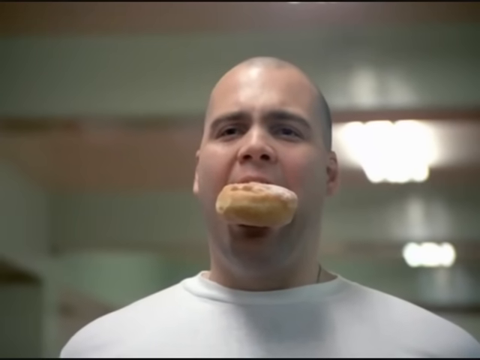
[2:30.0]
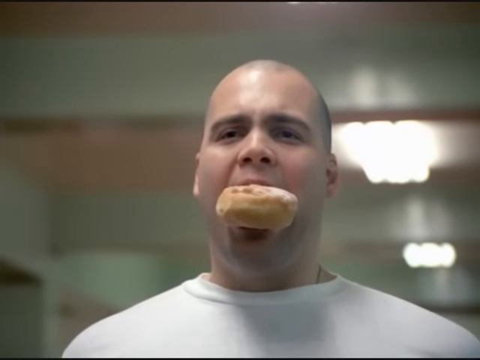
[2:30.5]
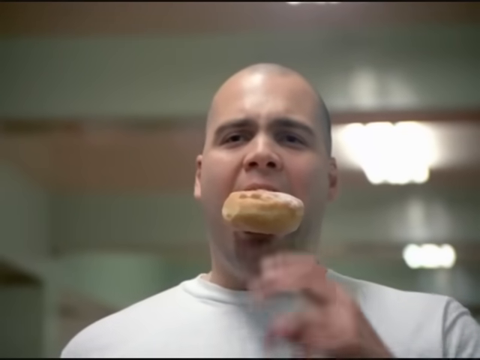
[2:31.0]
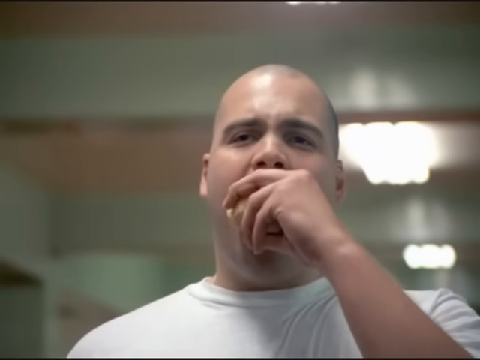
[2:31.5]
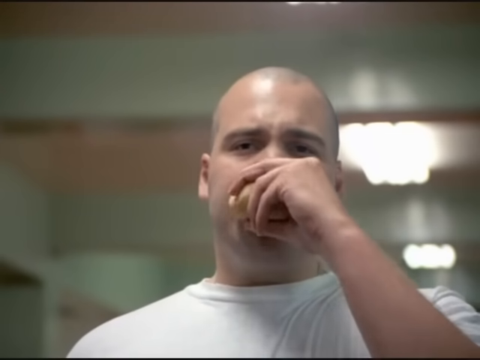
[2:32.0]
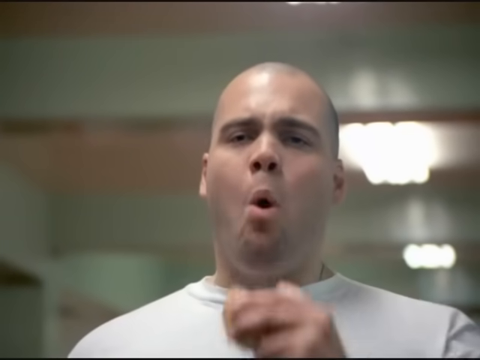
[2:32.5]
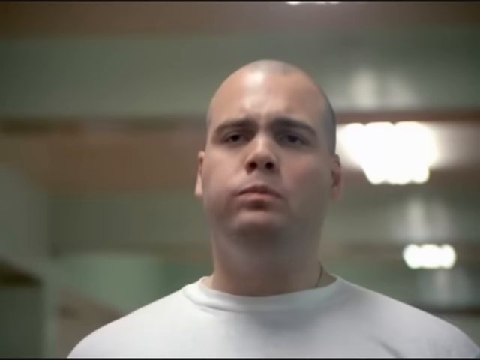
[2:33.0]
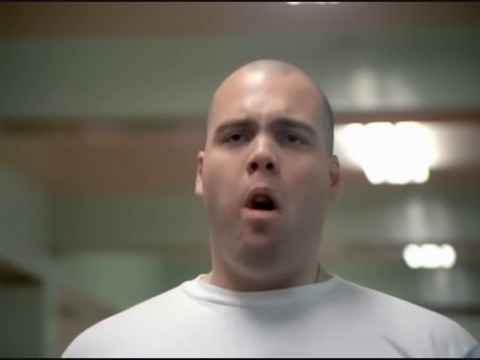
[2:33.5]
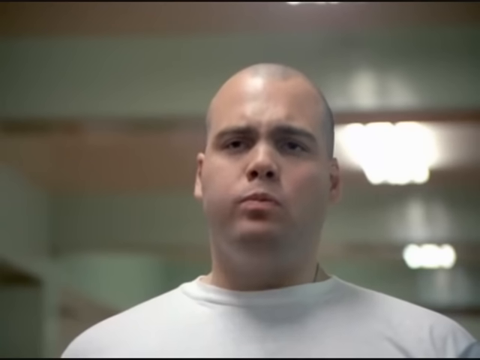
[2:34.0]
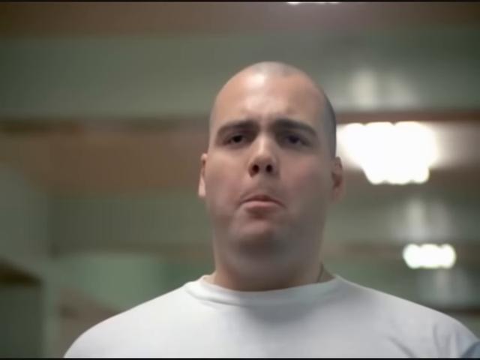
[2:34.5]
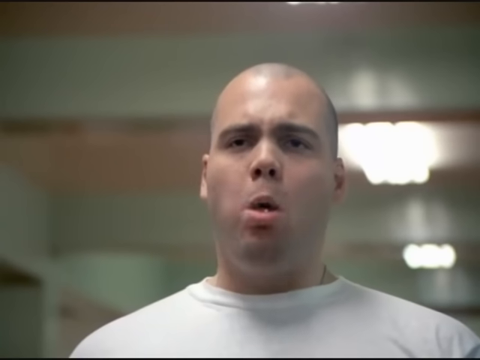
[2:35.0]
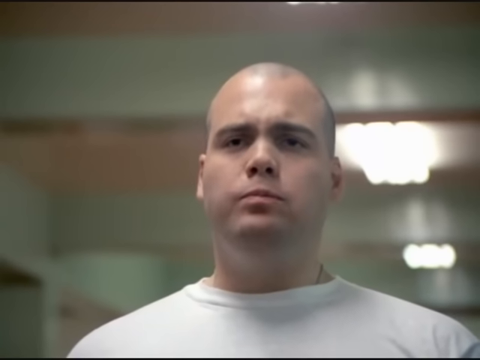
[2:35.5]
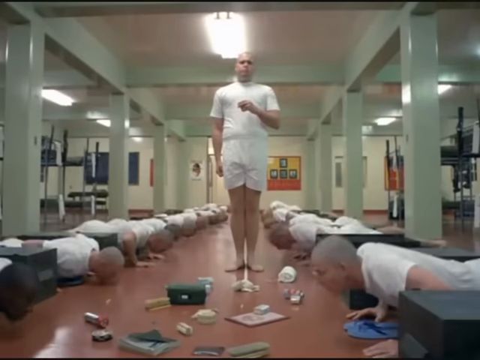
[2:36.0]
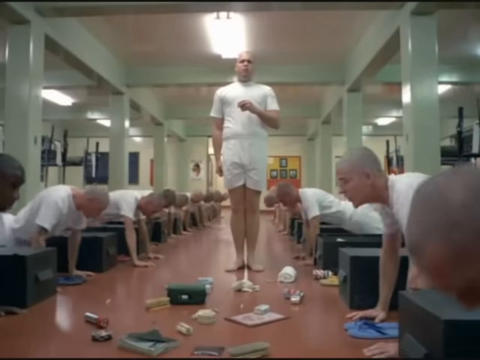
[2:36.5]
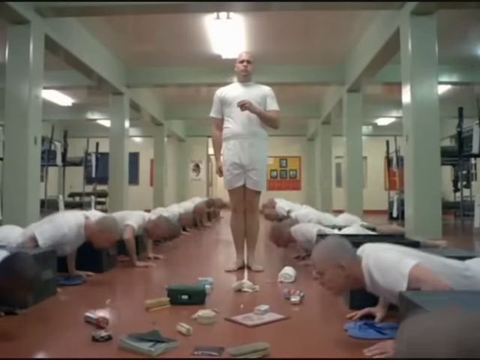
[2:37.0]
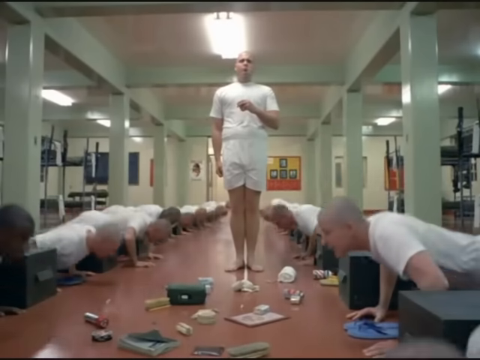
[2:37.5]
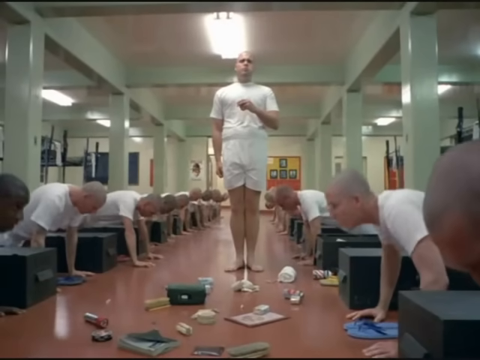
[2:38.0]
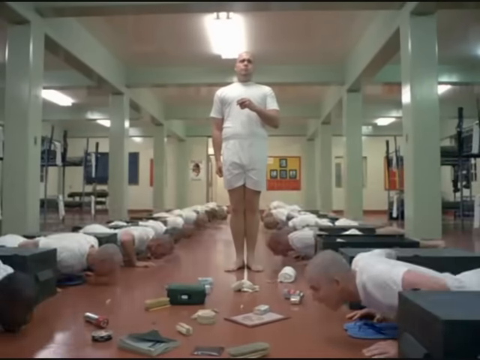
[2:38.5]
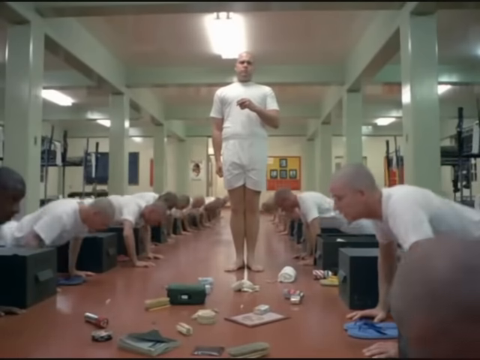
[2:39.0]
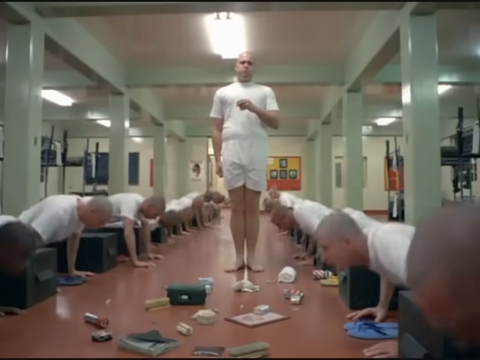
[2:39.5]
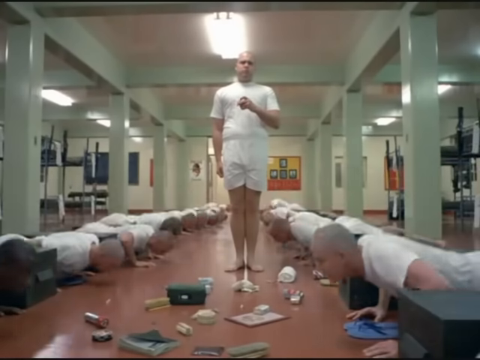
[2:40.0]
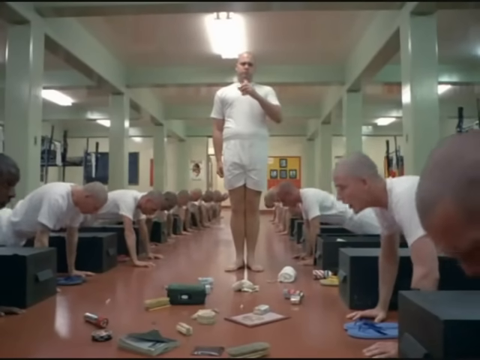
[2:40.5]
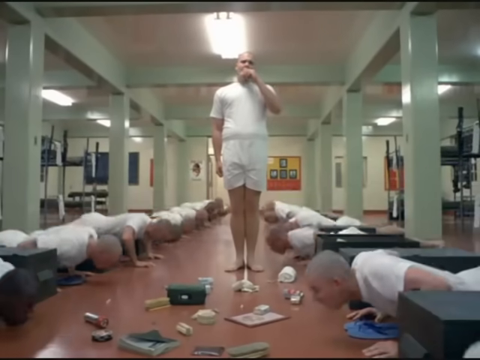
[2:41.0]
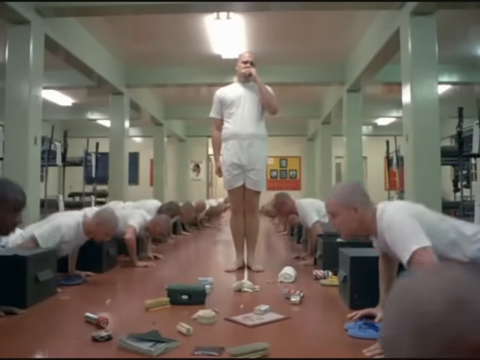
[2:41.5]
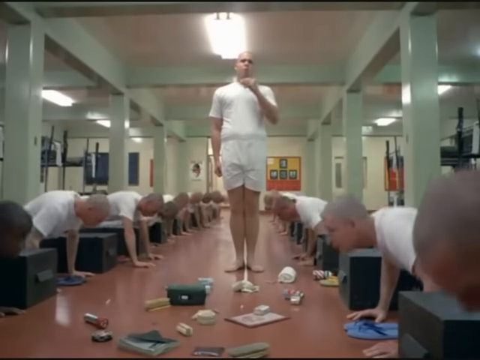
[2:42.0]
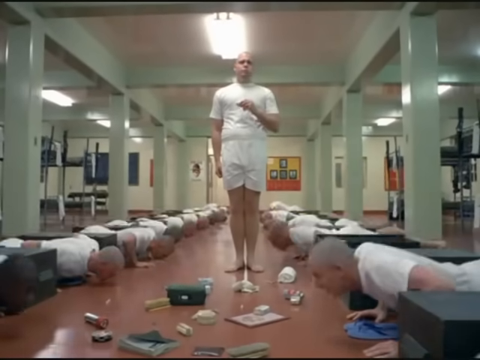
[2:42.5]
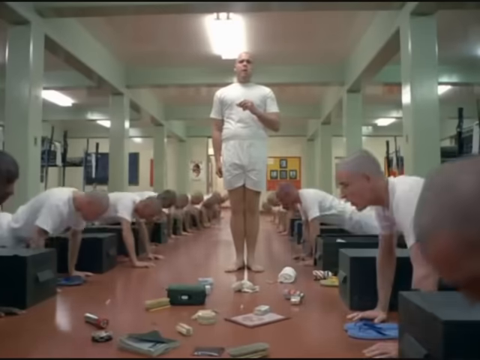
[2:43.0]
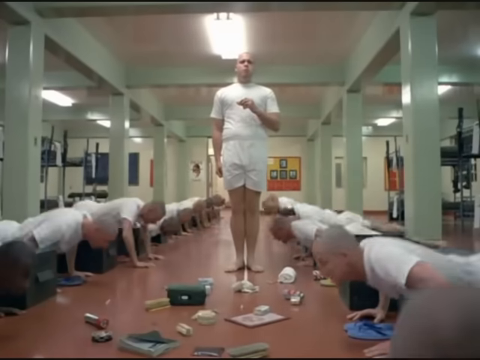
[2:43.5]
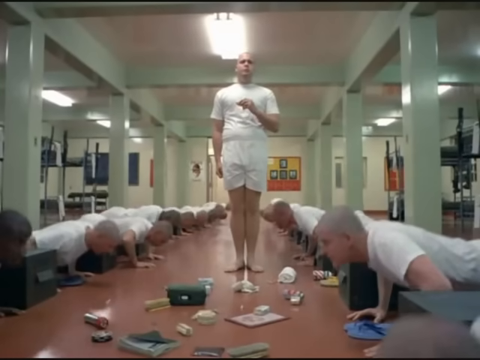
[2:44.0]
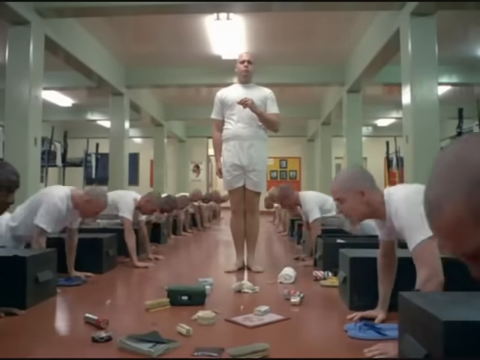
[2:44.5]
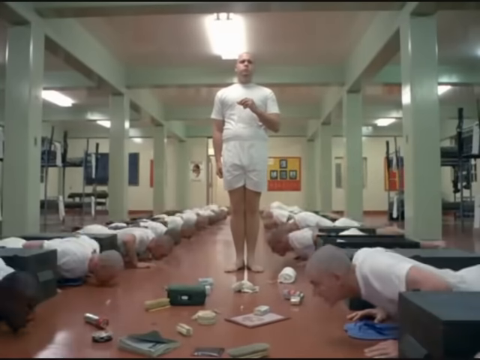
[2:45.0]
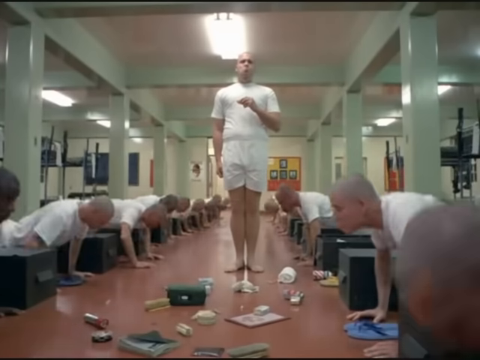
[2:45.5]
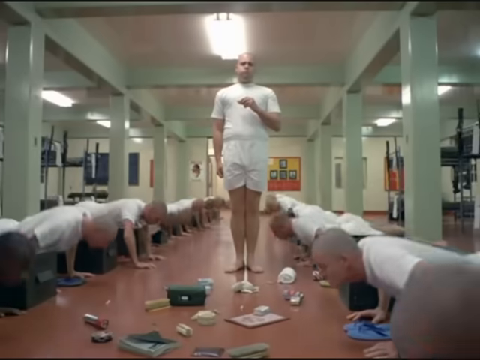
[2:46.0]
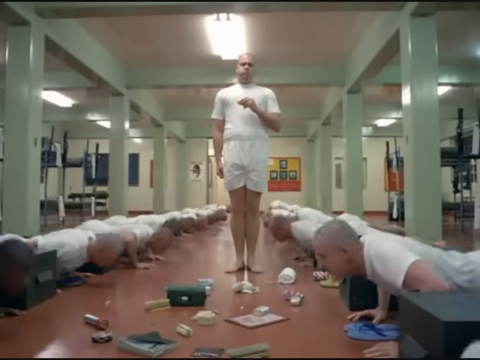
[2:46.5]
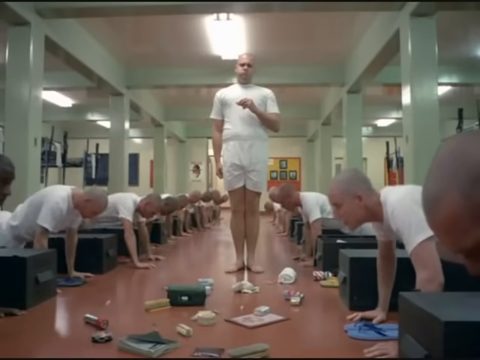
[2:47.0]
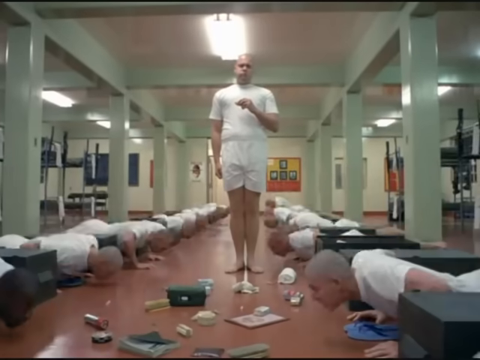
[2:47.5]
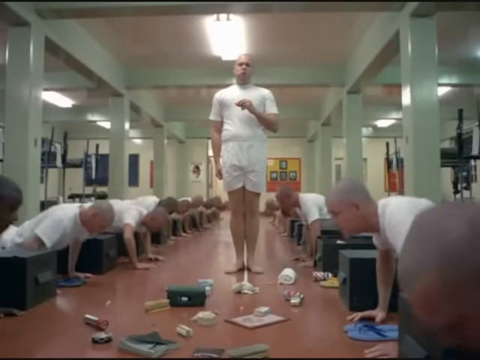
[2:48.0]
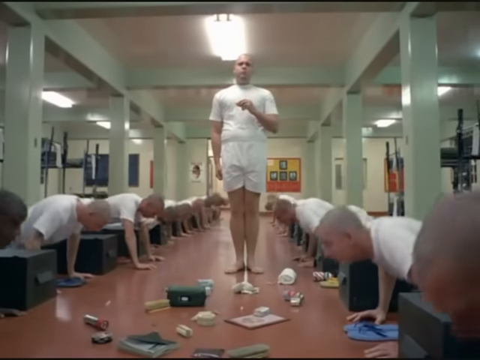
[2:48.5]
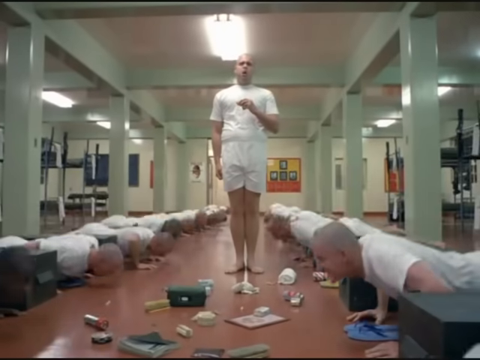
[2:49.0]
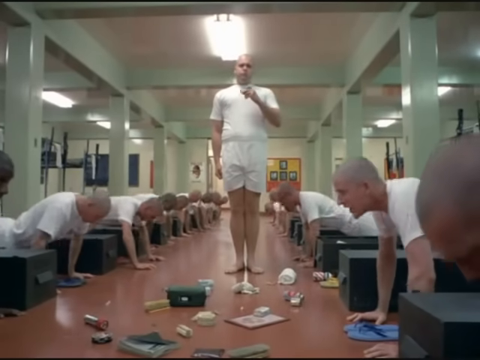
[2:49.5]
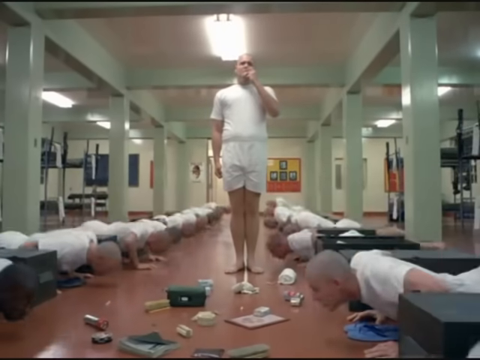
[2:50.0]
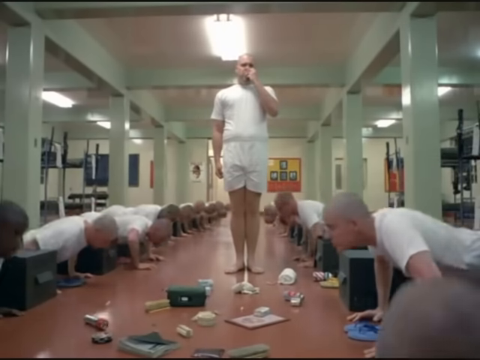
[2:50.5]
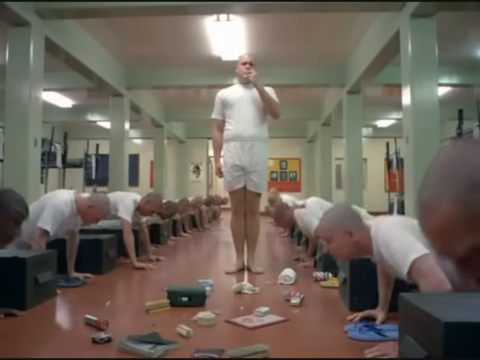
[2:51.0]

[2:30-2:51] A larger man in a white crewneck-style t-shirt has a large, glazed, golden brown pastry in his mouth. He raises his left hand, grabs the other side of the pastry, takes a bite and lowers it, chewing with his right cheek bulging. The camera zooms out to show multiple other men dressed similarly to him doing push-ups in a barracks room. They are all next to foot lockers, which are closed except for the one next to the man with the pastry. He is next to the open foot locker, surrounded by various personal grooming items such as shaving cream, shirts and a bar of soap. He continues to eat the donut, standing at attention in the middle of the aisle, while the others around him keep doing push-ups, lowering themselves to the ground and raising themselves up. He reaches down and takes a third bite of the pastry.